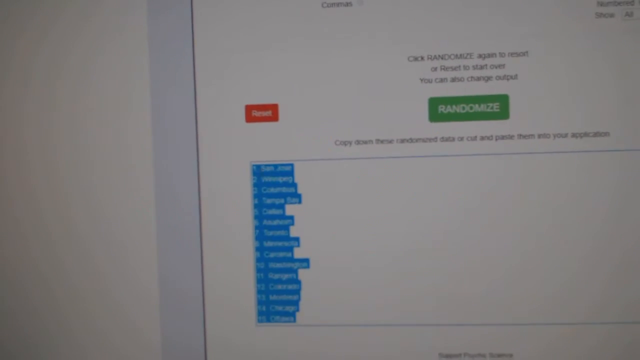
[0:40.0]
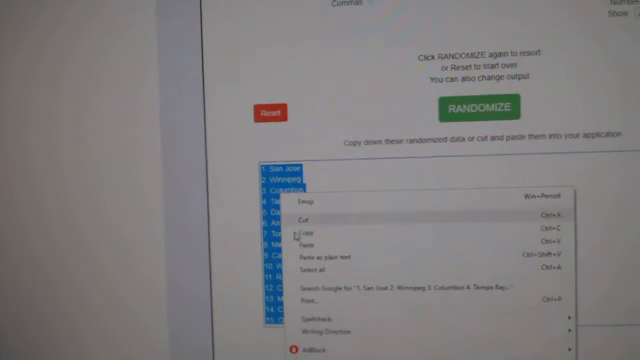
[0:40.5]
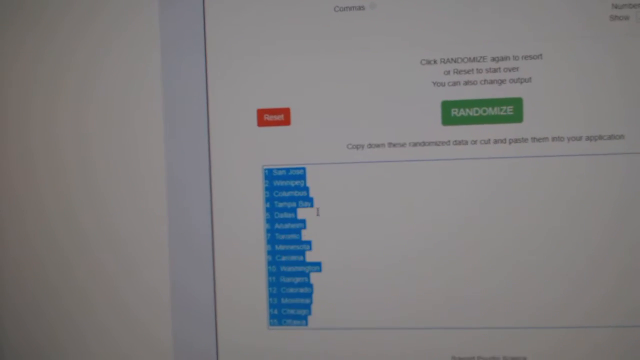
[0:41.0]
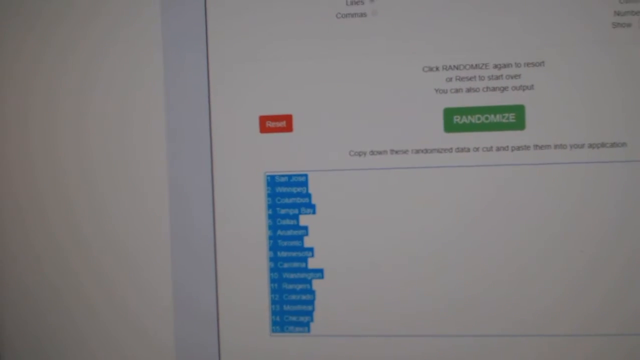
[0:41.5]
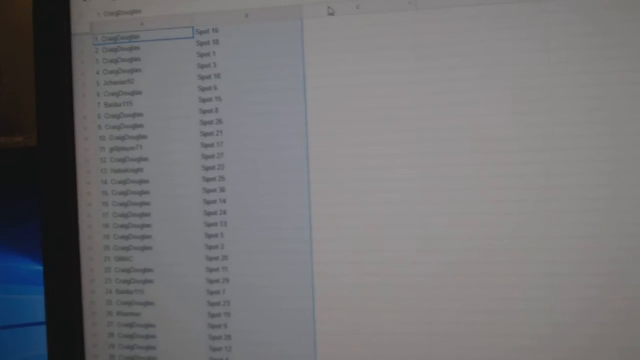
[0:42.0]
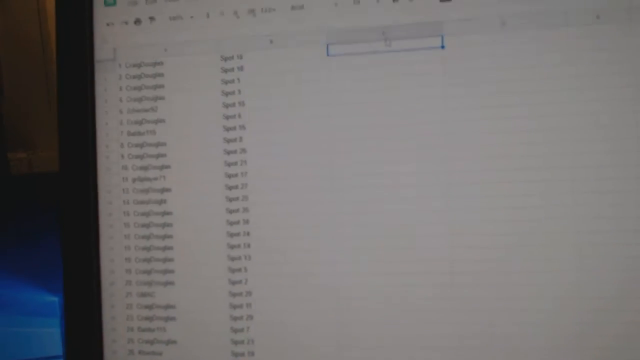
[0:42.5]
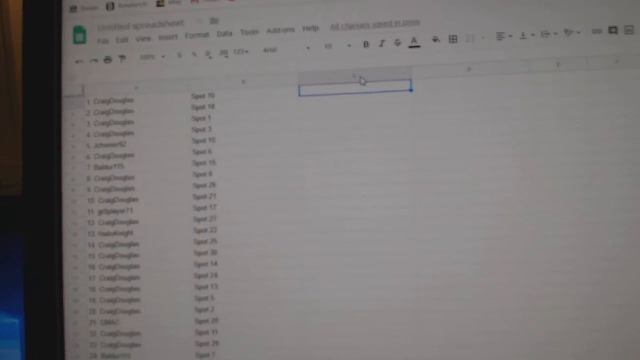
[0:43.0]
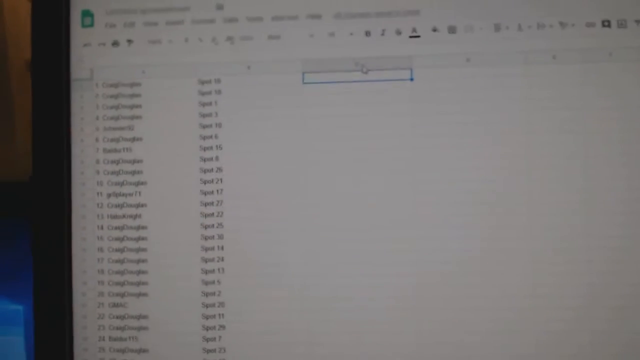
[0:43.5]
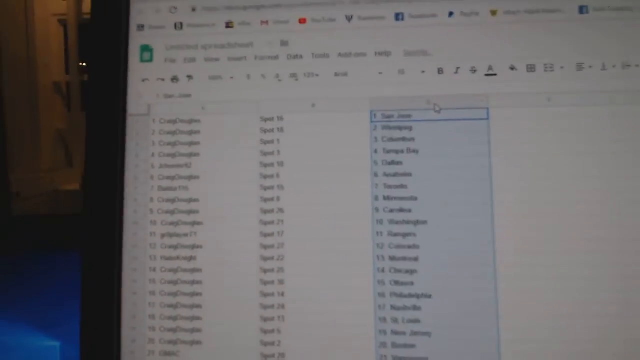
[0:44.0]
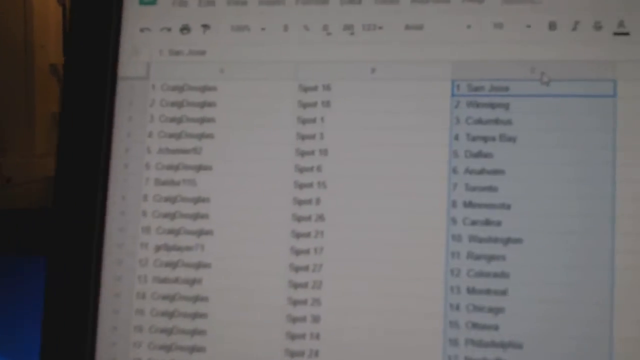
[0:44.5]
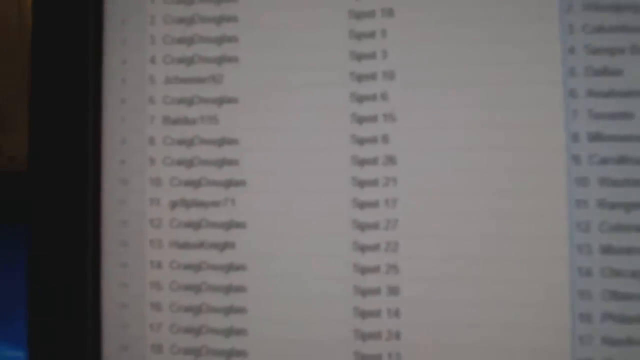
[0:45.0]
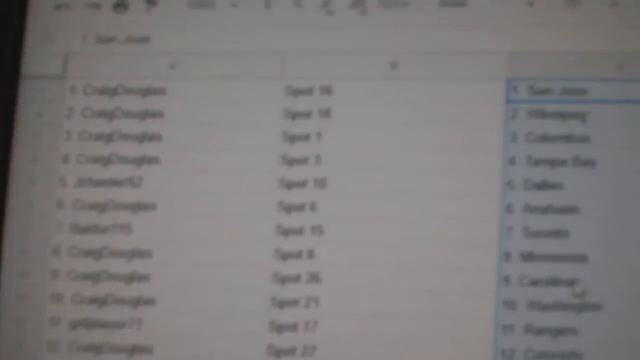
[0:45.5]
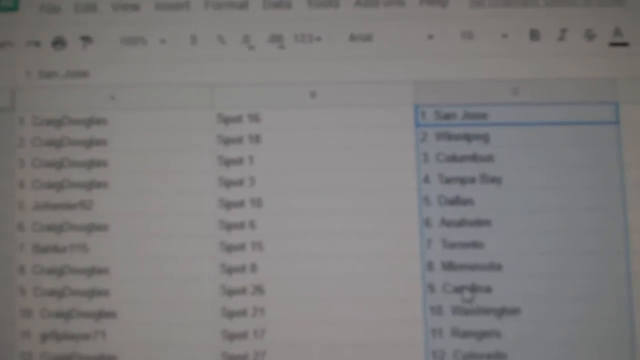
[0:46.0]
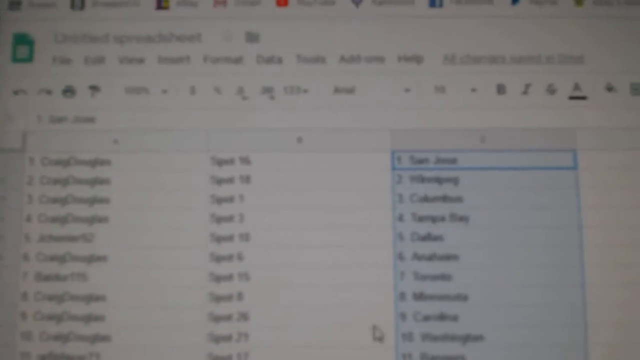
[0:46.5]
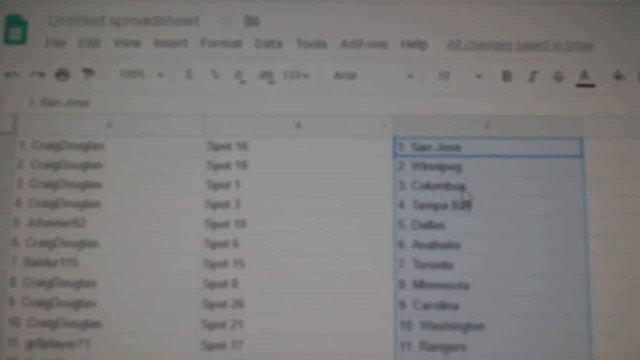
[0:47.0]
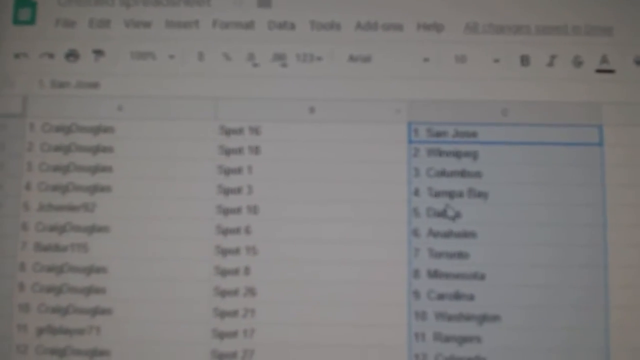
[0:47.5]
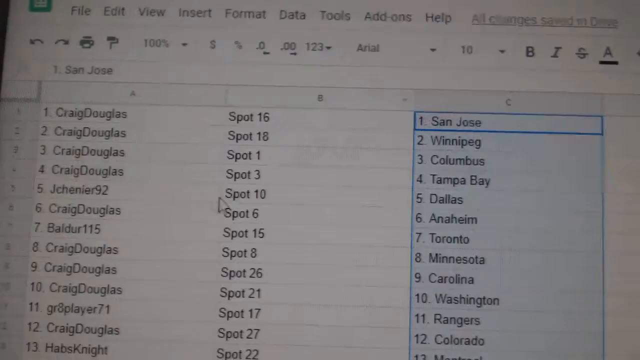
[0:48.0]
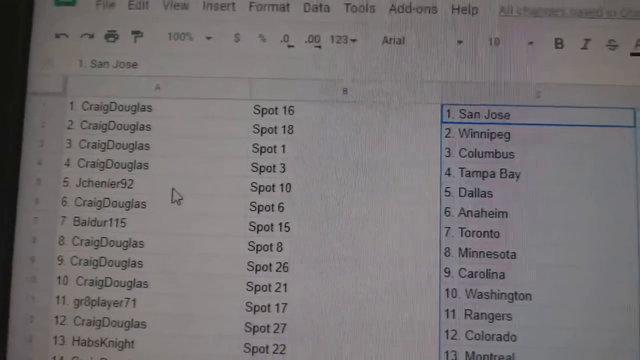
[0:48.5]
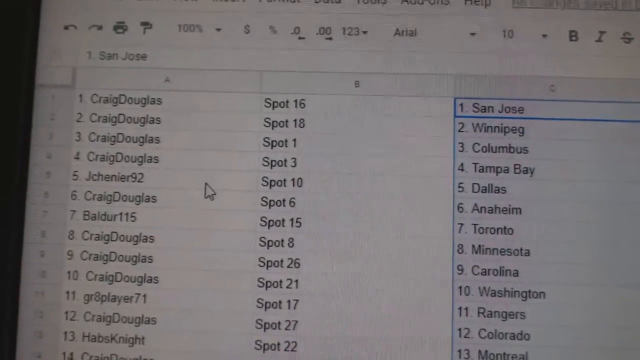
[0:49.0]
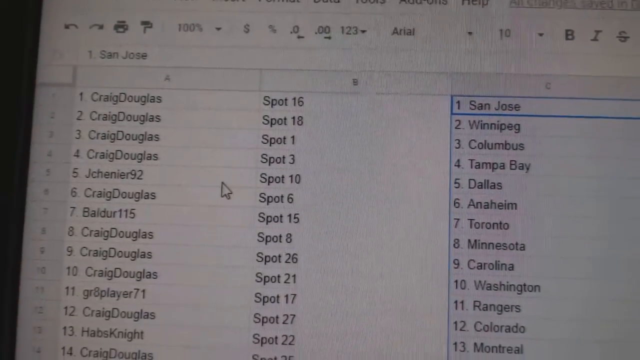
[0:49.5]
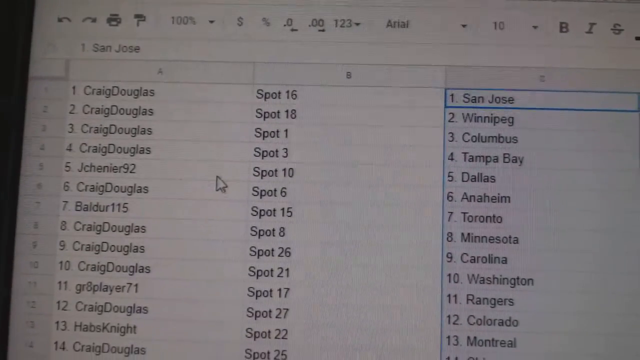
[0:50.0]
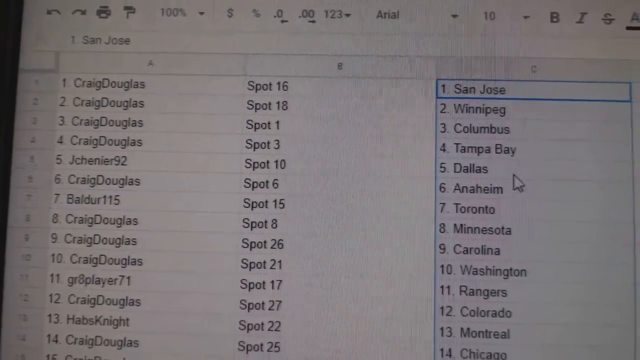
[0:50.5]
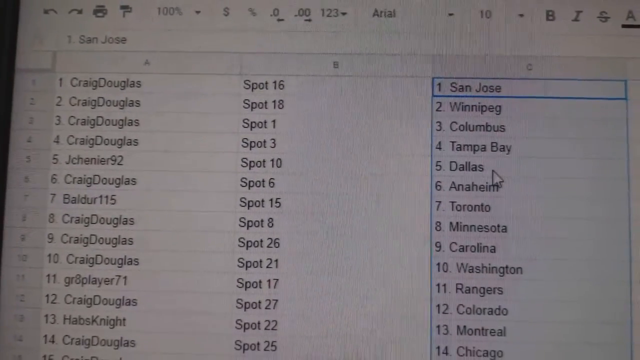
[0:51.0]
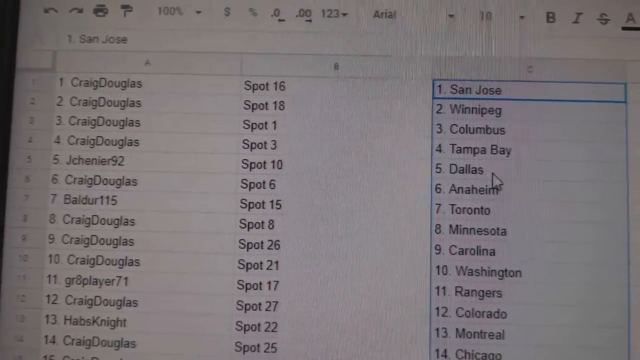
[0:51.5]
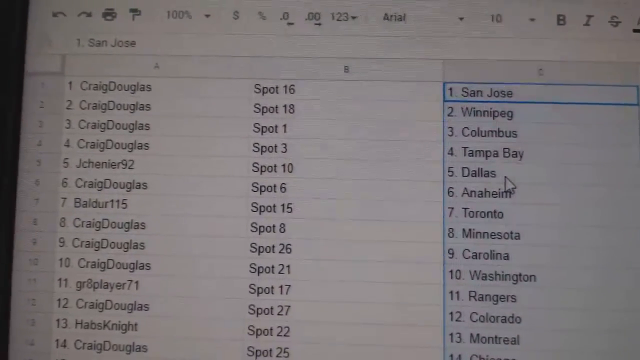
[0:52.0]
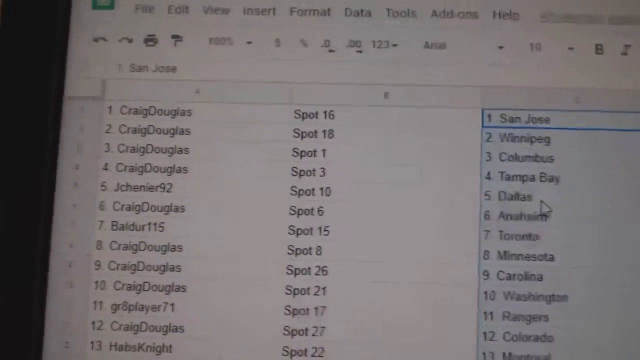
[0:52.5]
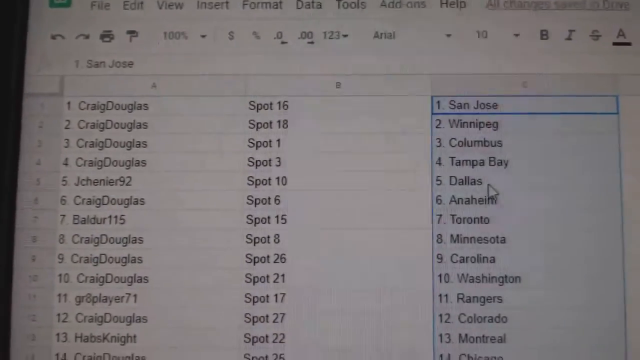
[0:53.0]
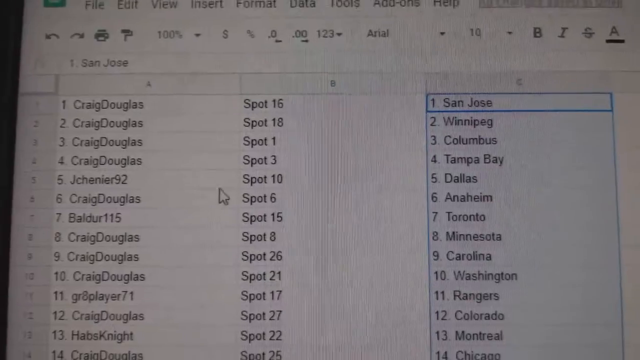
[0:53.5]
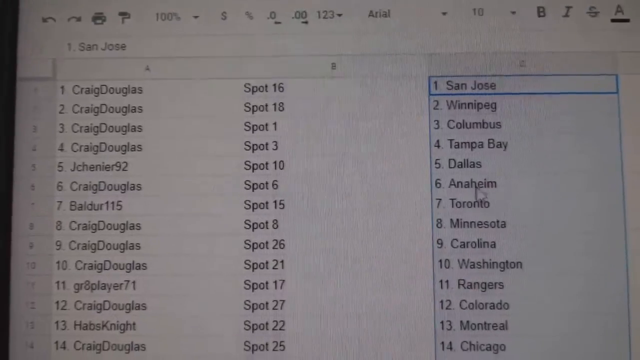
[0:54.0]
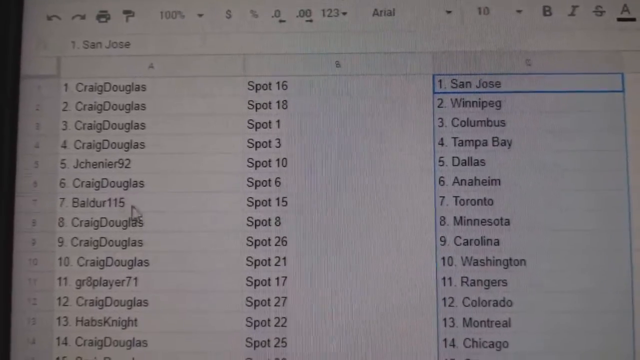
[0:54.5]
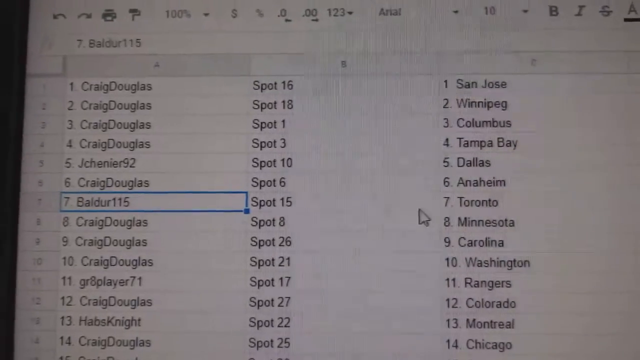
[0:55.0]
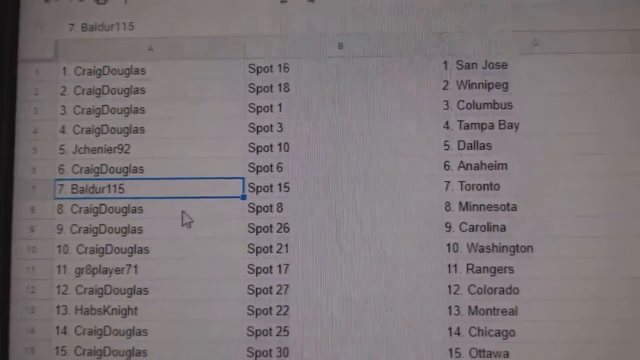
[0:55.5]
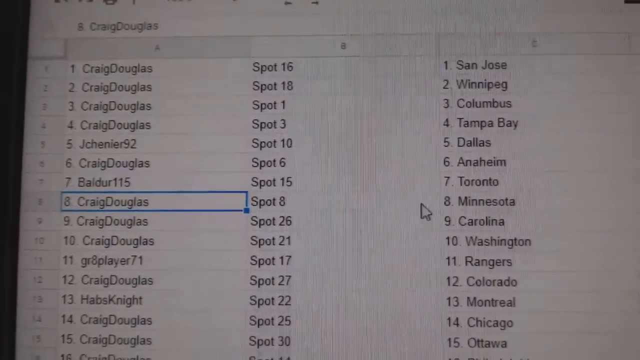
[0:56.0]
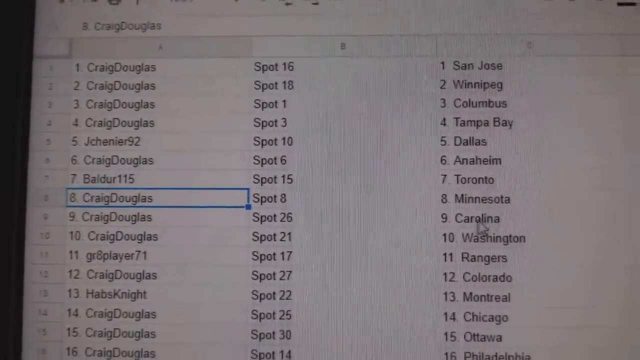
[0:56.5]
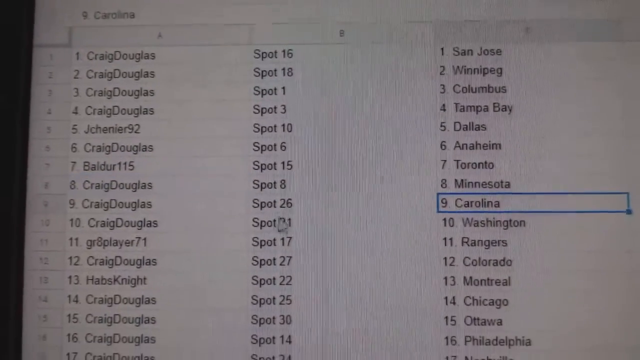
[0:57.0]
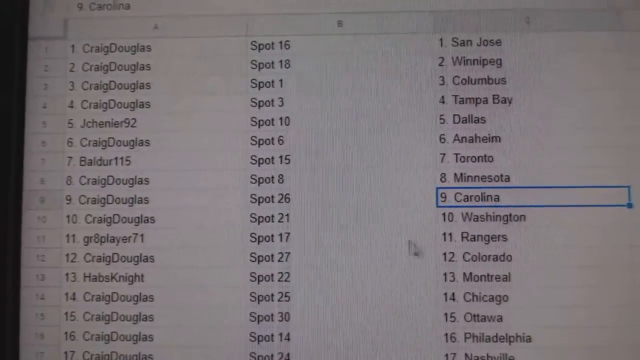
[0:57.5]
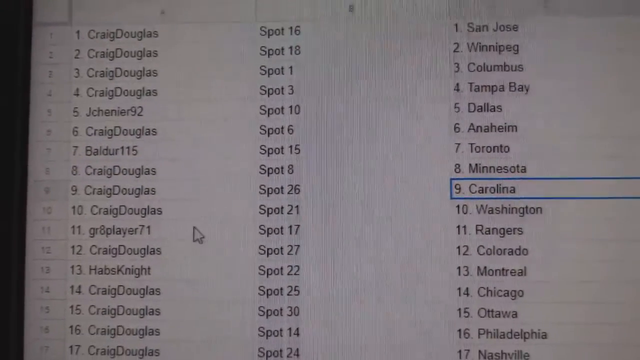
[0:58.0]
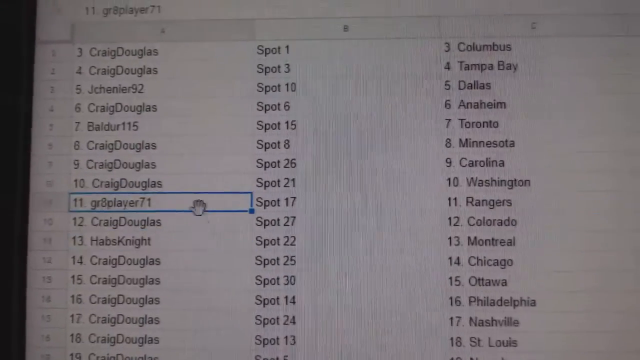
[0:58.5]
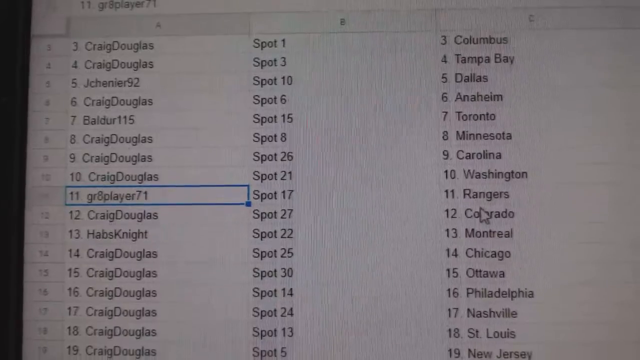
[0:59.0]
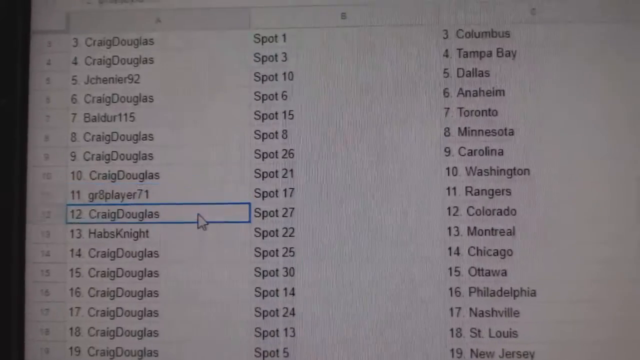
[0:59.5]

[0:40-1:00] The screen recording continues, apparently made by a person holding up a phone camera to a monitor. Data is viewed on a Google Sheet with three columns. A randomizer has been used to populate the third column, which is cities. The camera is held close to the monitor, so the text of the names is readable. The first column is names, perhaps login names or usernames, the second column is spots with numbers, and the third column is cities. The randomizer is still being used to gather data.